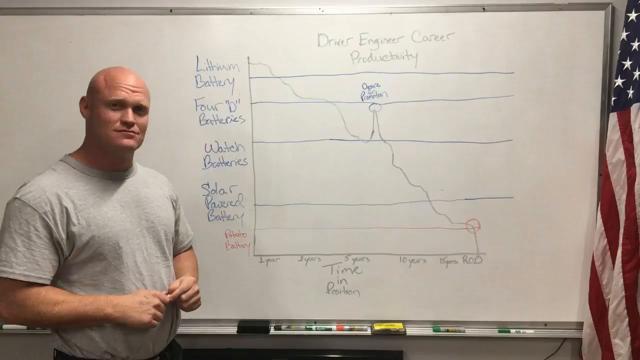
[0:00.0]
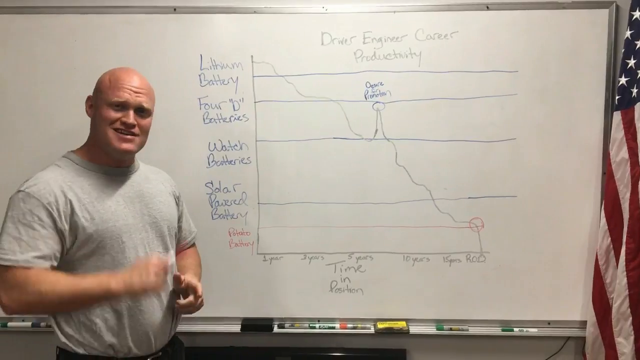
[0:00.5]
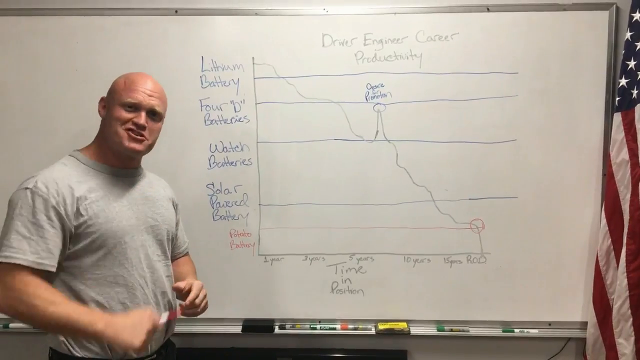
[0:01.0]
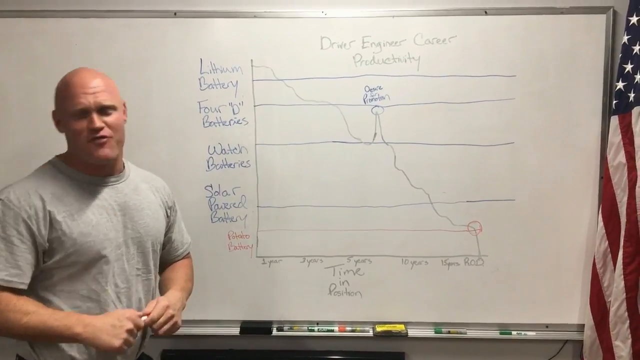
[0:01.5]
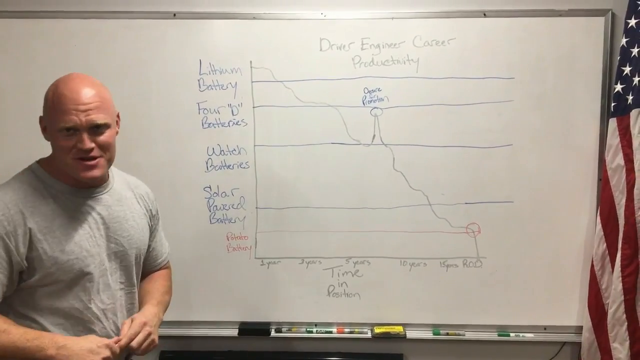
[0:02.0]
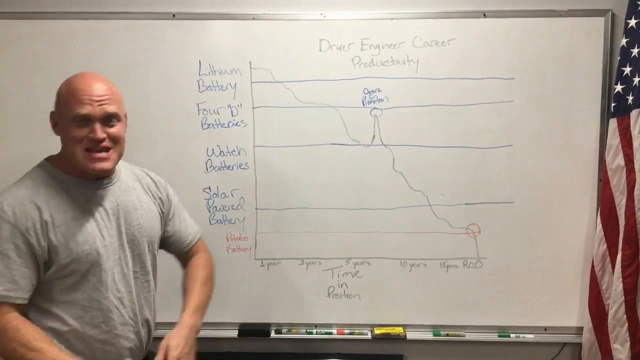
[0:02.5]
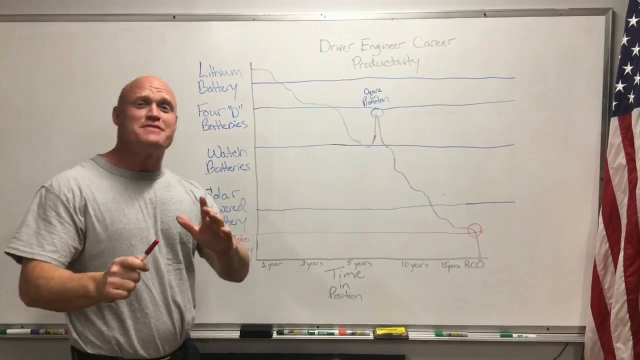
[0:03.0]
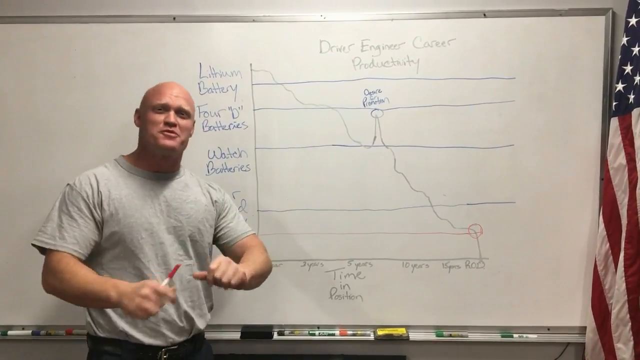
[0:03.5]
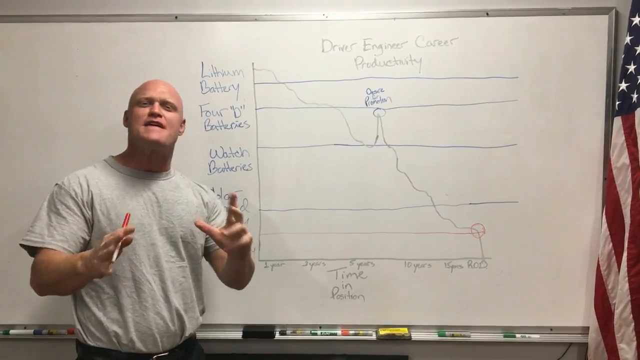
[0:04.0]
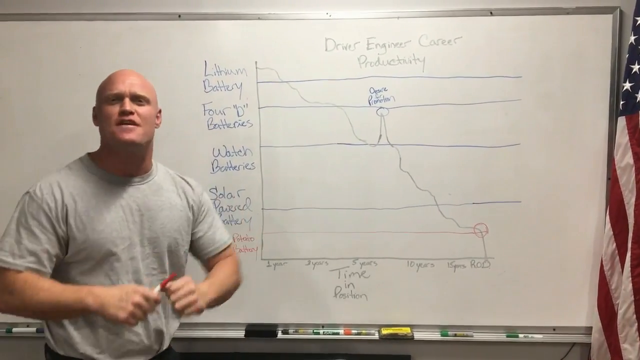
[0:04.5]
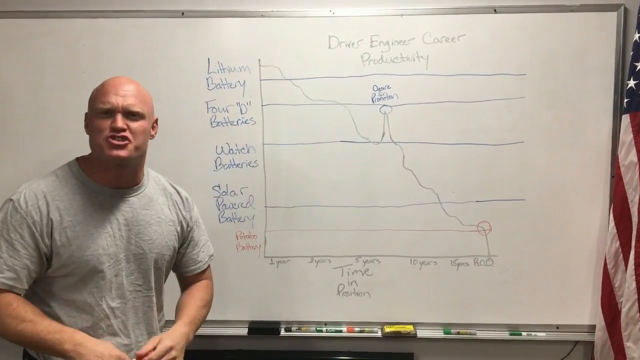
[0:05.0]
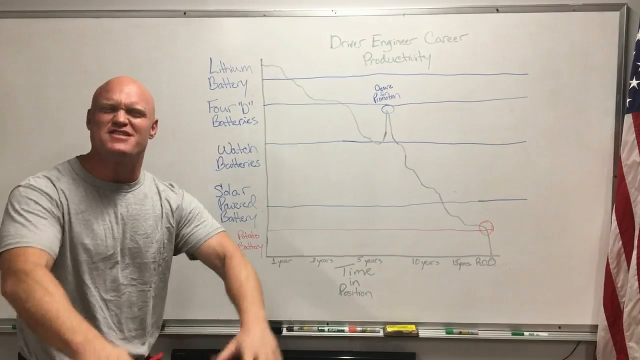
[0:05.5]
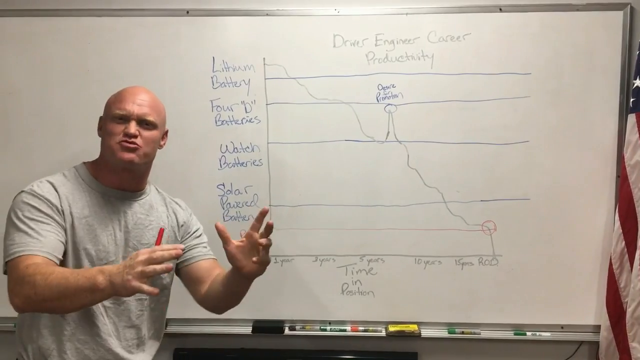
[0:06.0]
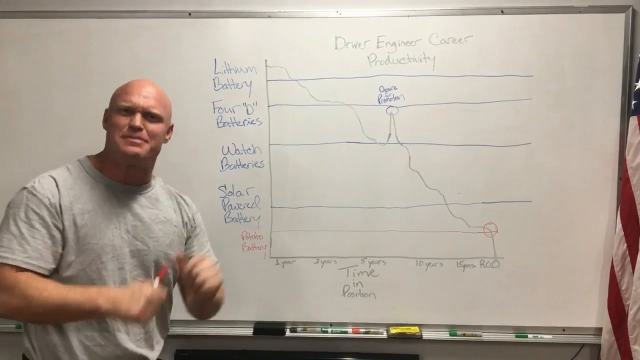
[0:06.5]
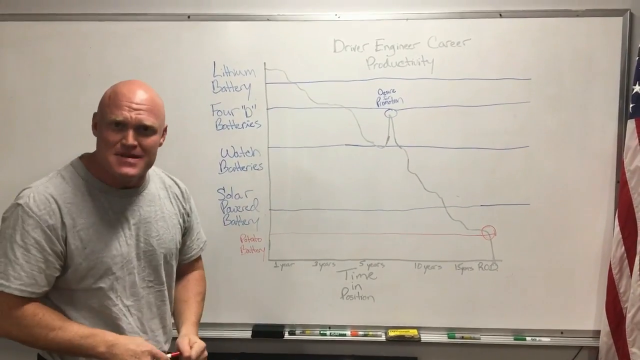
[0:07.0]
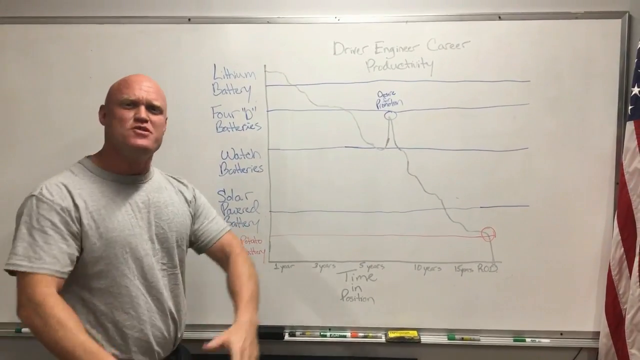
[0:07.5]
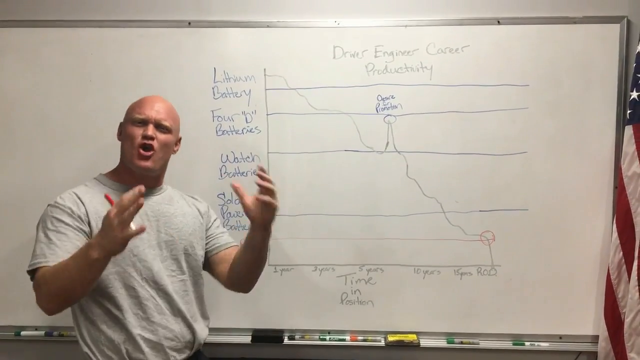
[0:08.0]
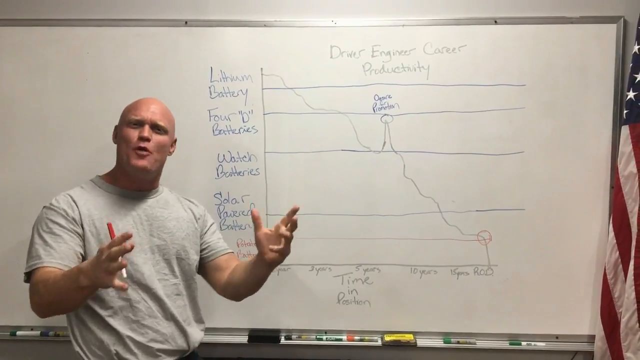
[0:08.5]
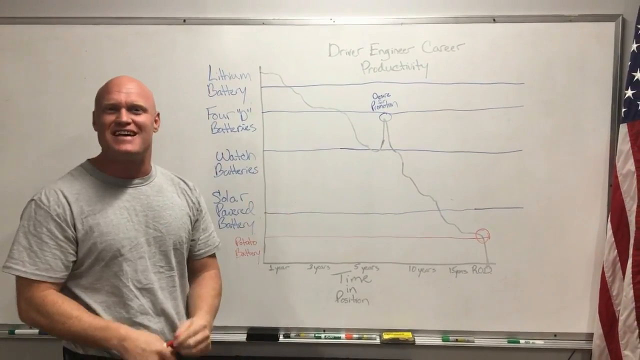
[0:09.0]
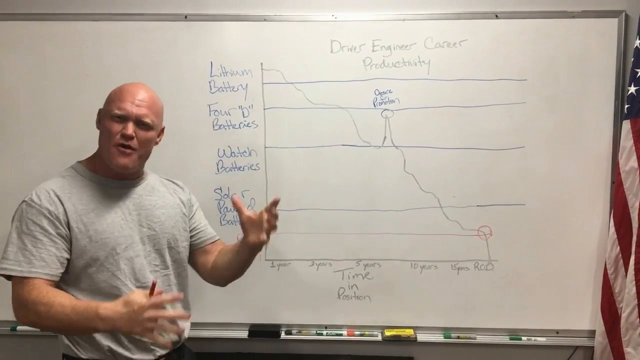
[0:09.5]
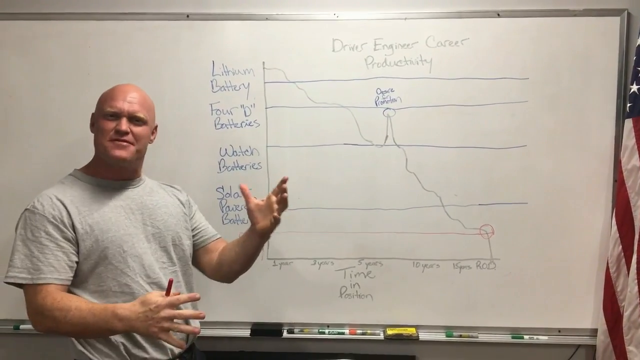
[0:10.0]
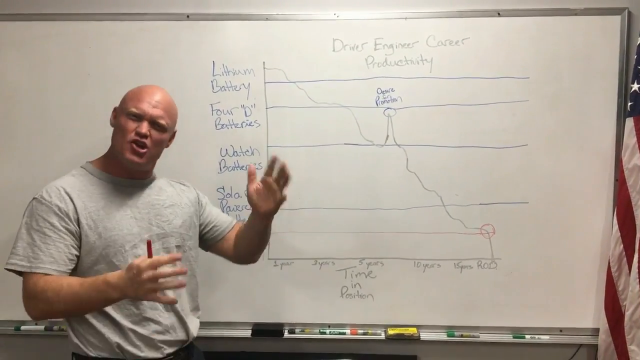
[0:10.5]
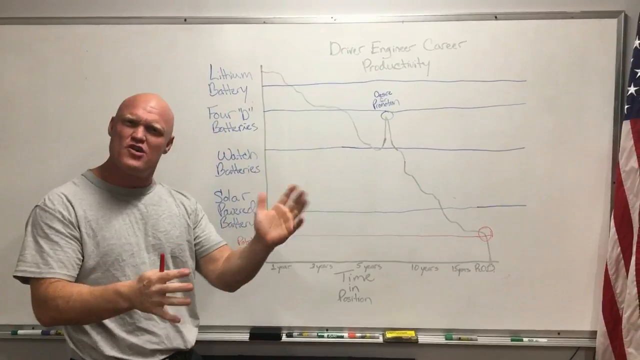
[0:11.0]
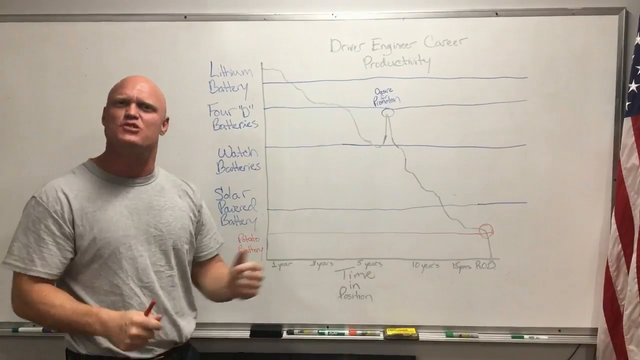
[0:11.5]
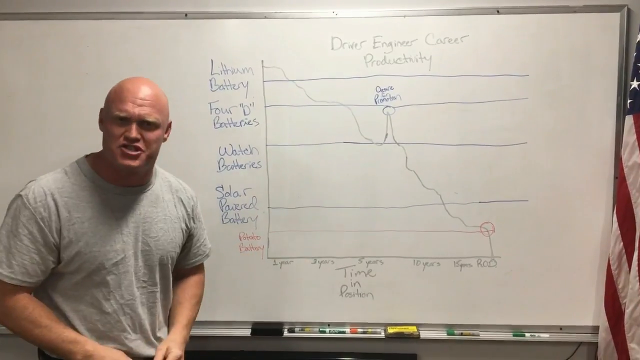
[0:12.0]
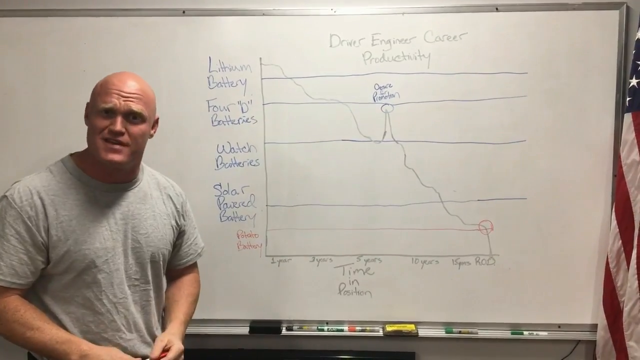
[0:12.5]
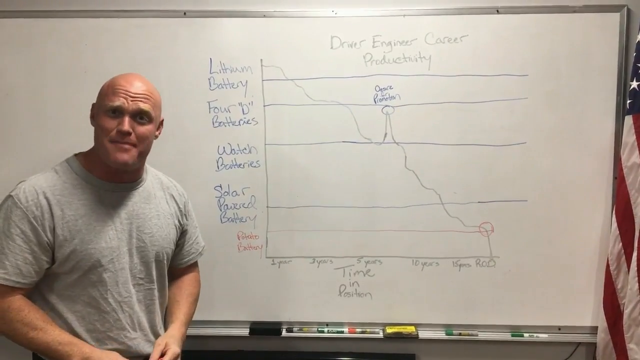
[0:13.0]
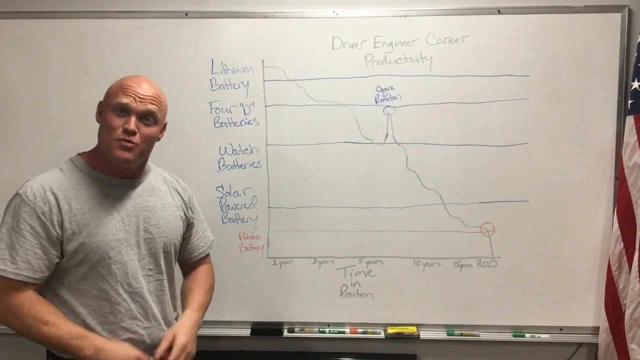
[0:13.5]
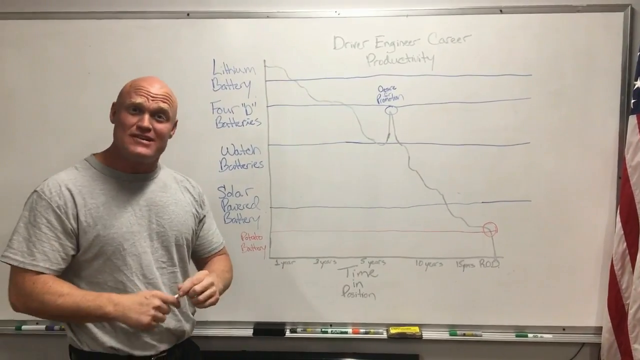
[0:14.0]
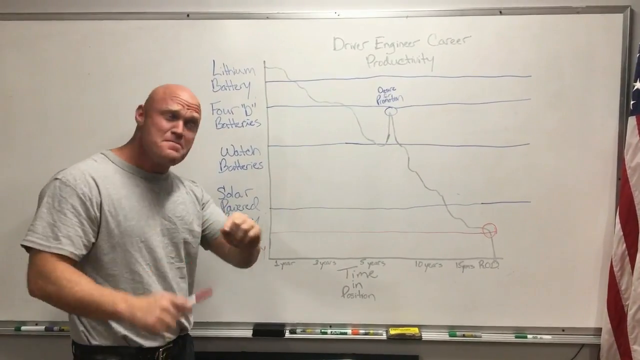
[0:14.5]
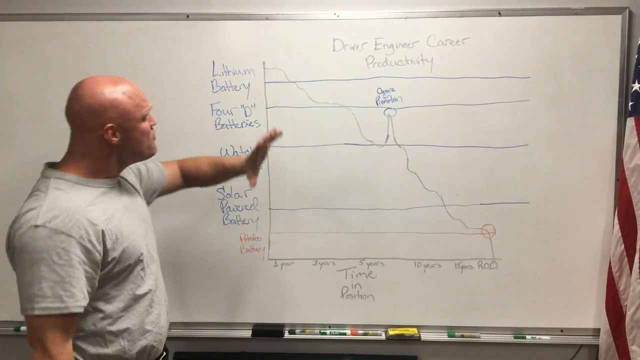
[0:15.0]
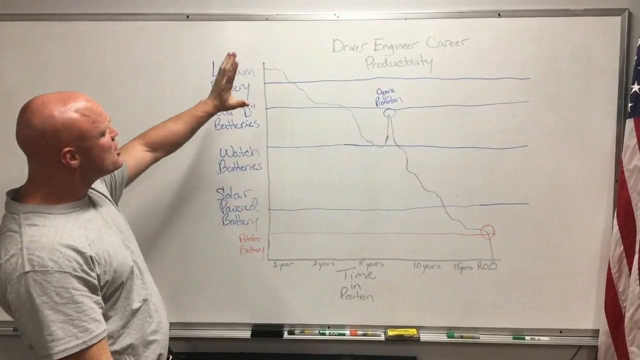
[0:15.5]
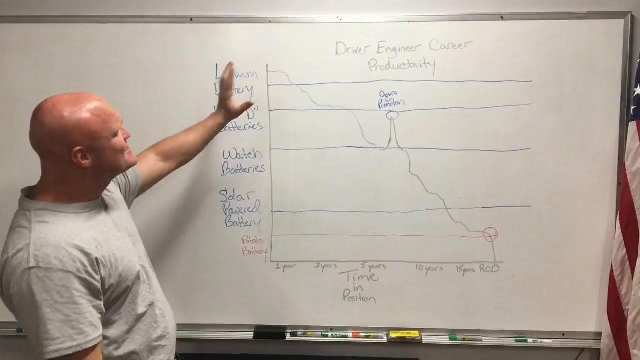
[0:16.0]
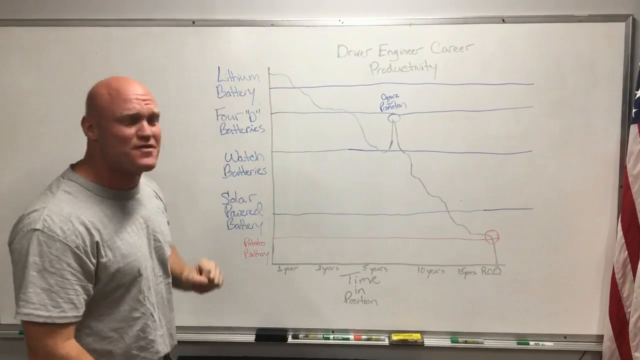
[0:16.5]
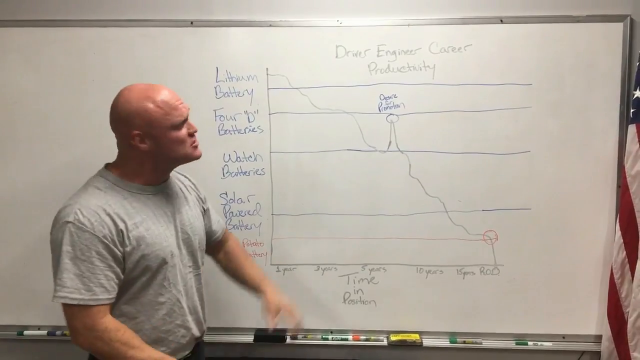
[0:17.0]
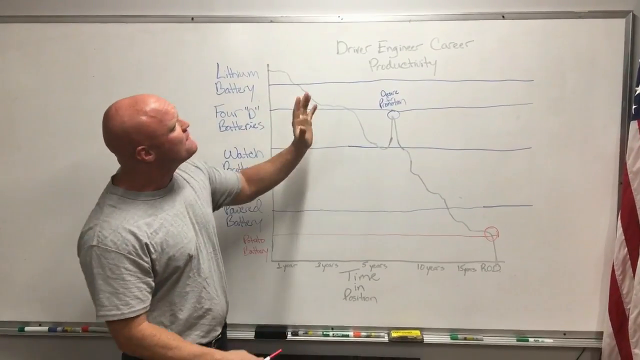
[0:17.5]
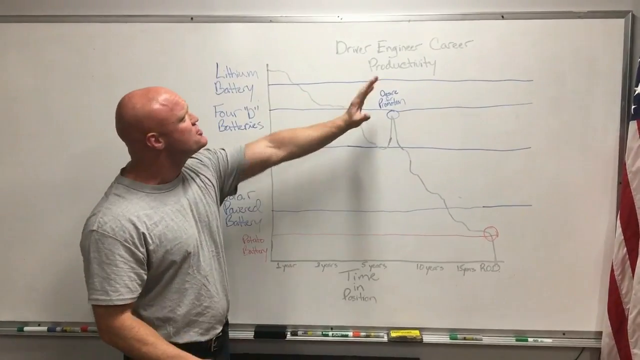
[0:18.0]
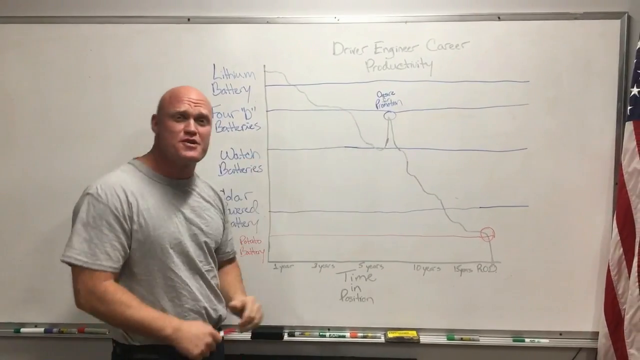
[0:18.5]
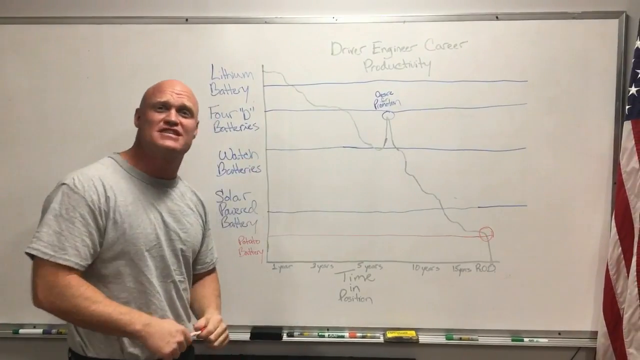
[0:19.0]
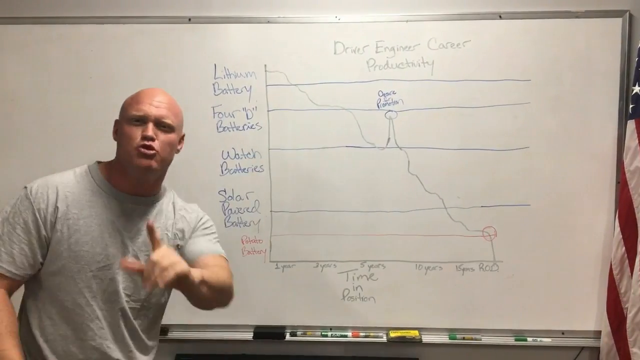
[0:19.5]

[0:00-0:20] A bald white man in a gray shirt stands next to a whiteboard with various things written on it, including the words "engineer," "career" and "productivity," along with a graph. He is very lively. He first appears standing to the left of the graph, looking directly into the camera. He points his marker toward the camera while saying something, then lowers it while gently moving from side to side, looking as if he is explaining something. He makes exuberant facial expressions and many hand gestures. He then appears to squat down a little lower and get excited. He raises his left hand toward the graph while looking at it, moves it outward, and then turns back to look directly into the camera.